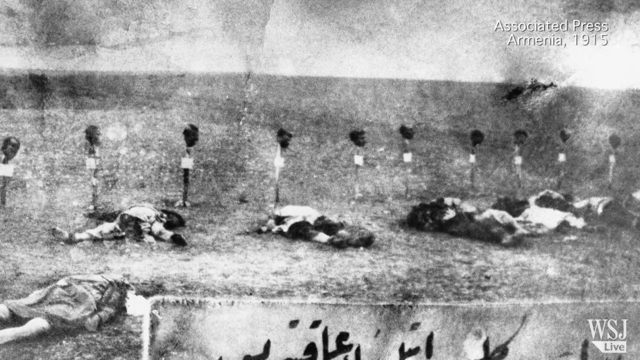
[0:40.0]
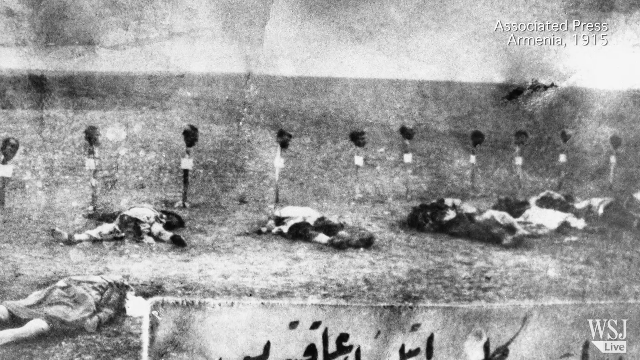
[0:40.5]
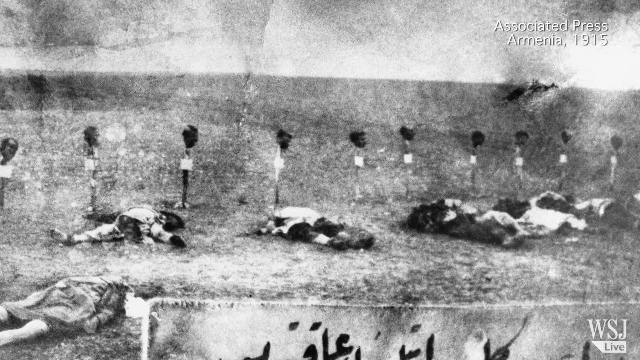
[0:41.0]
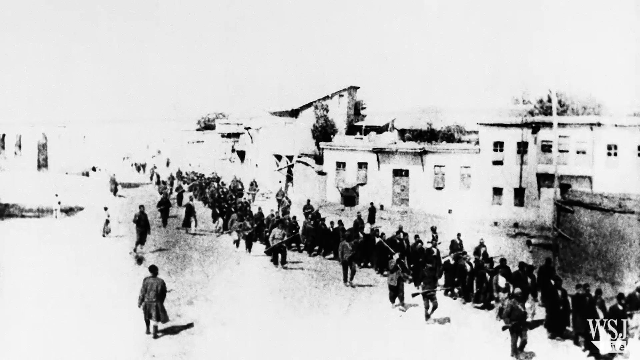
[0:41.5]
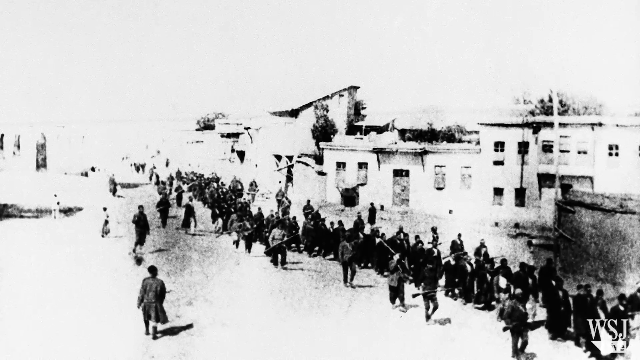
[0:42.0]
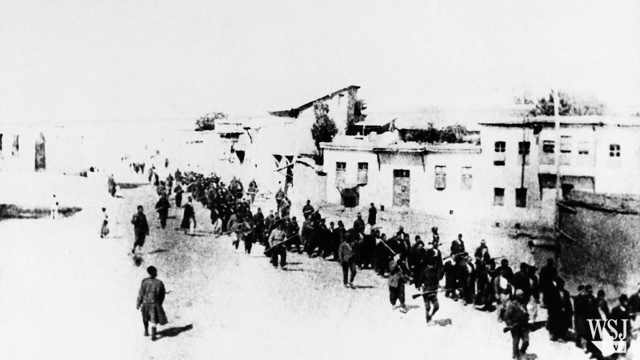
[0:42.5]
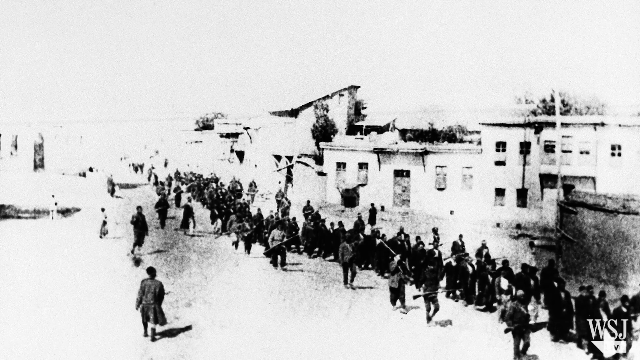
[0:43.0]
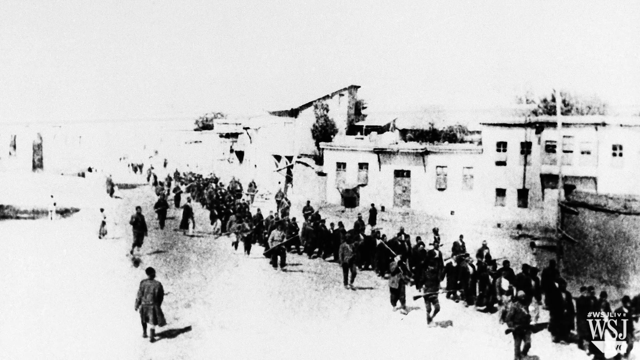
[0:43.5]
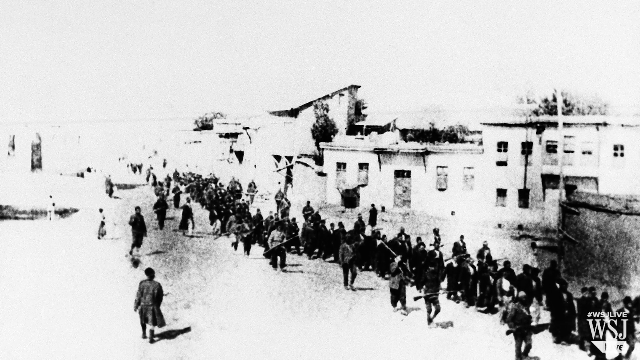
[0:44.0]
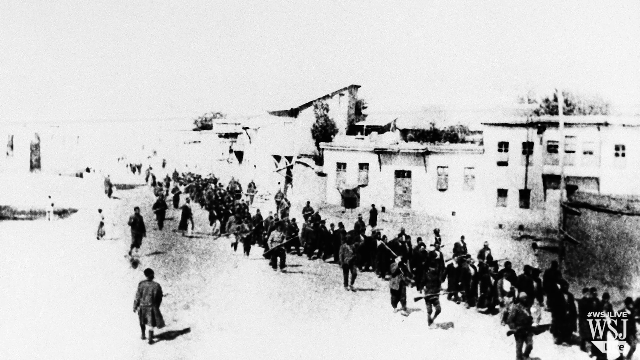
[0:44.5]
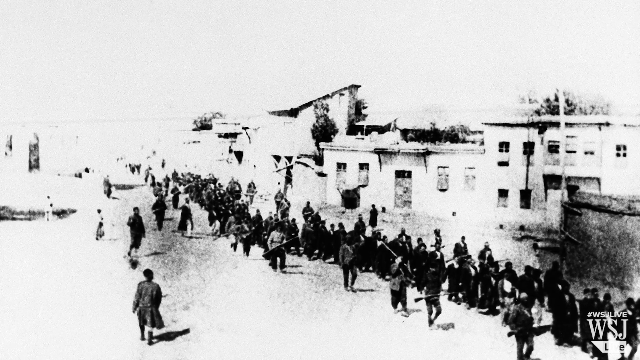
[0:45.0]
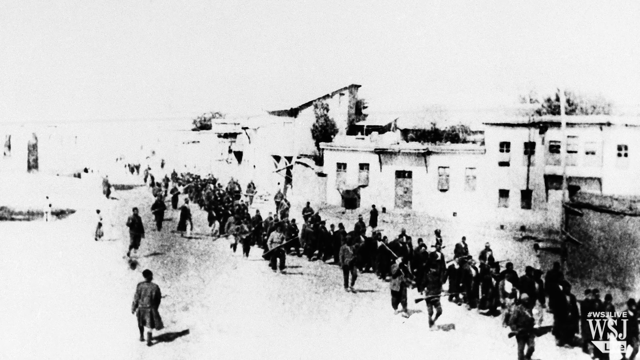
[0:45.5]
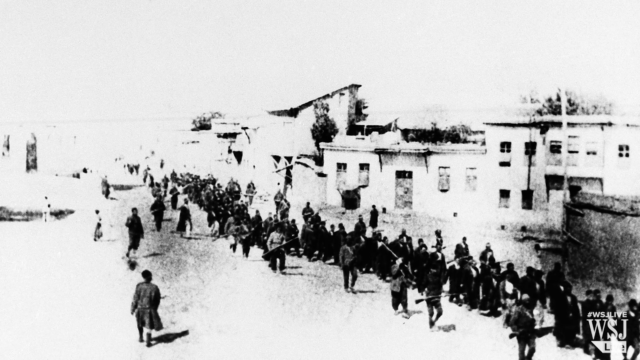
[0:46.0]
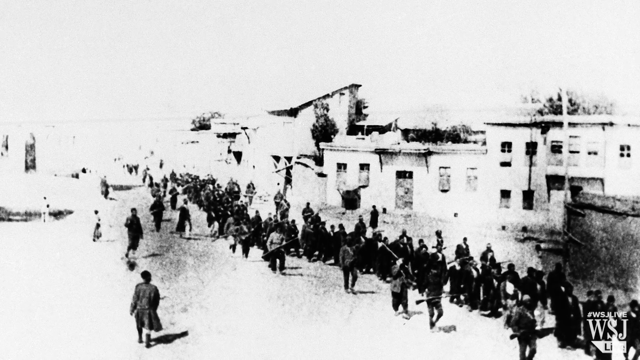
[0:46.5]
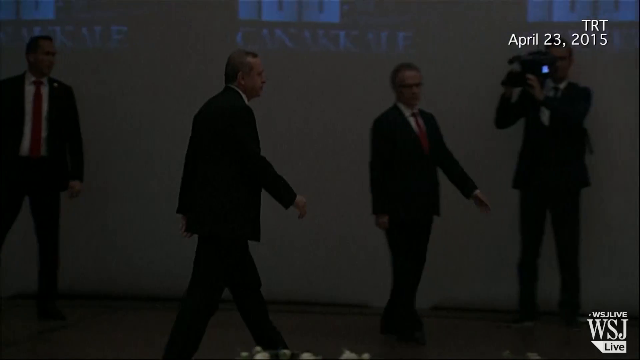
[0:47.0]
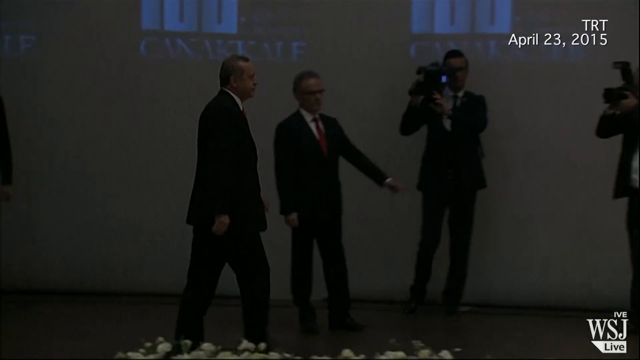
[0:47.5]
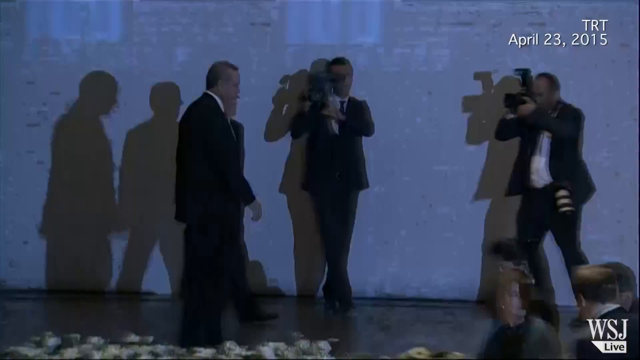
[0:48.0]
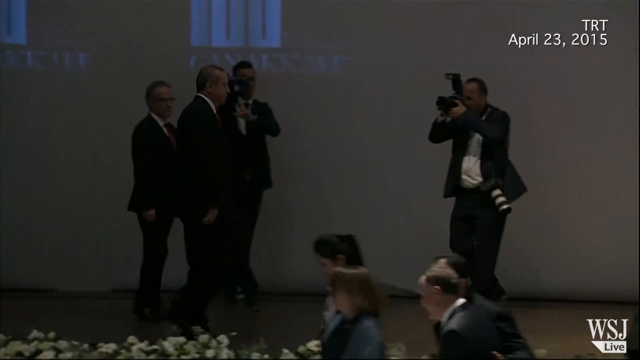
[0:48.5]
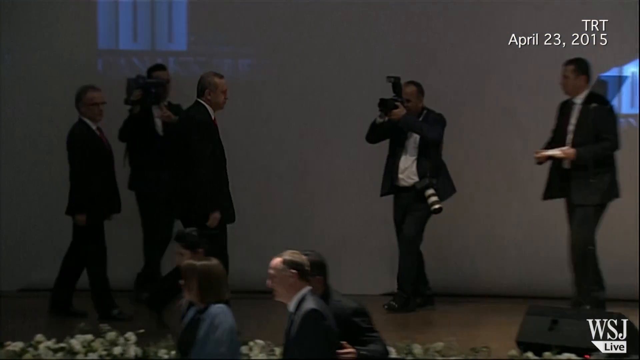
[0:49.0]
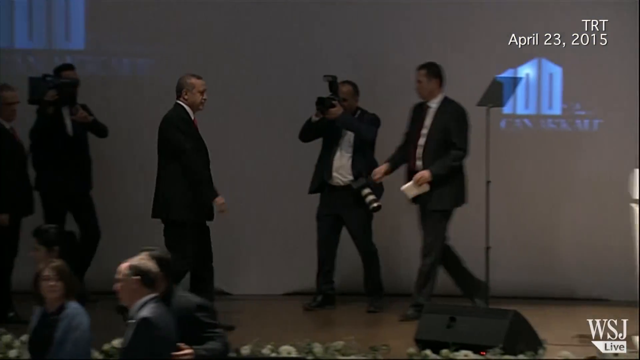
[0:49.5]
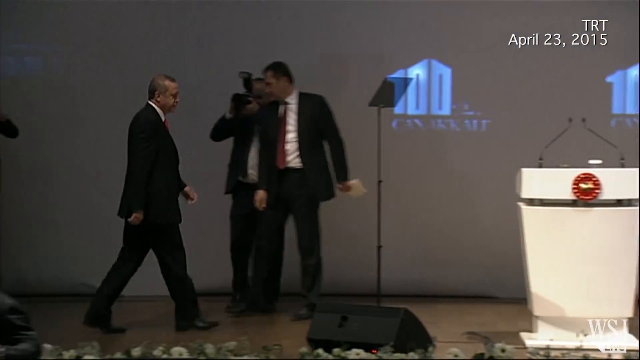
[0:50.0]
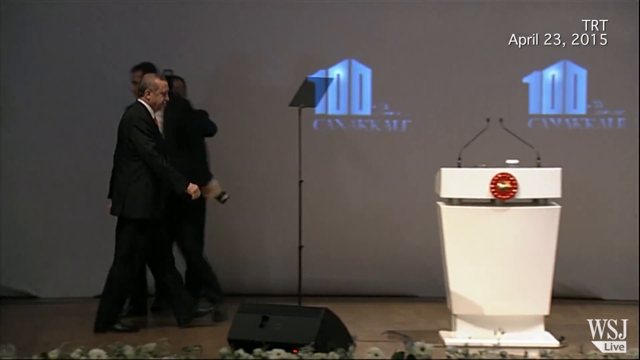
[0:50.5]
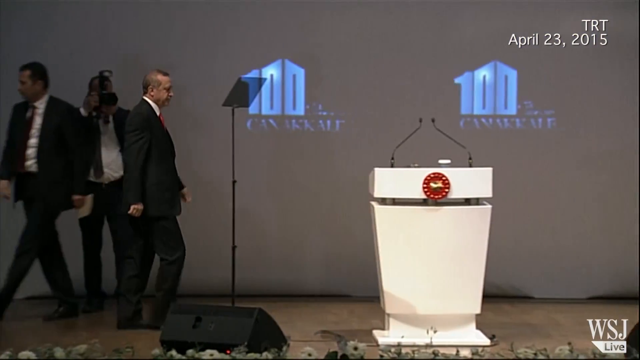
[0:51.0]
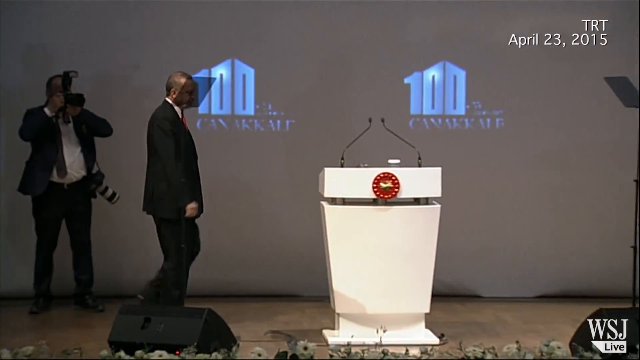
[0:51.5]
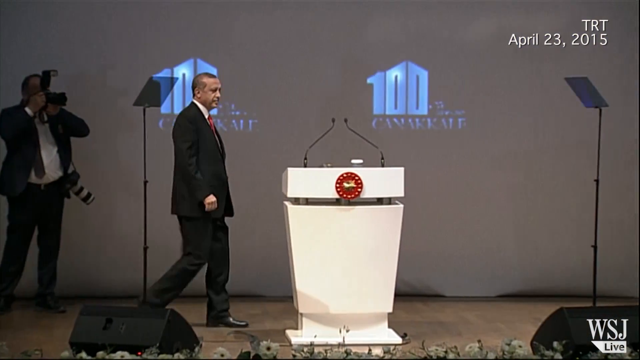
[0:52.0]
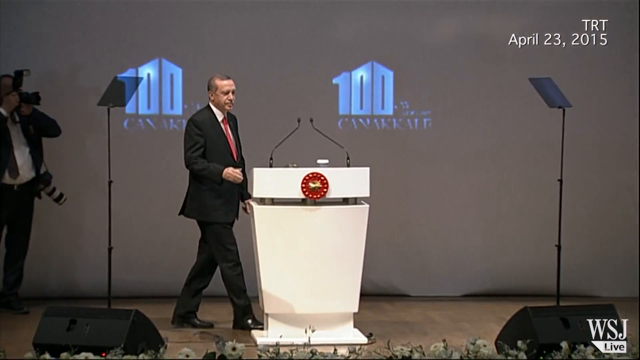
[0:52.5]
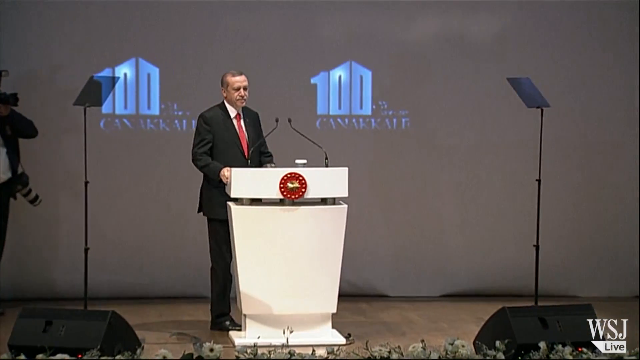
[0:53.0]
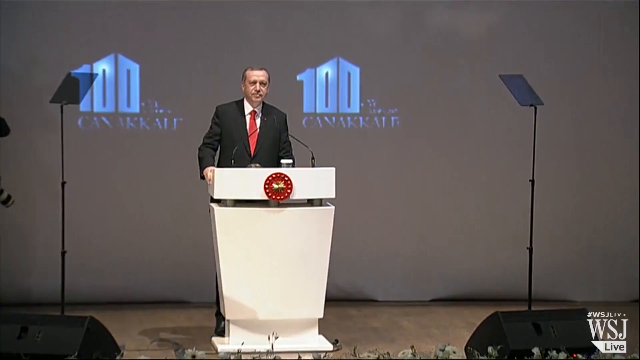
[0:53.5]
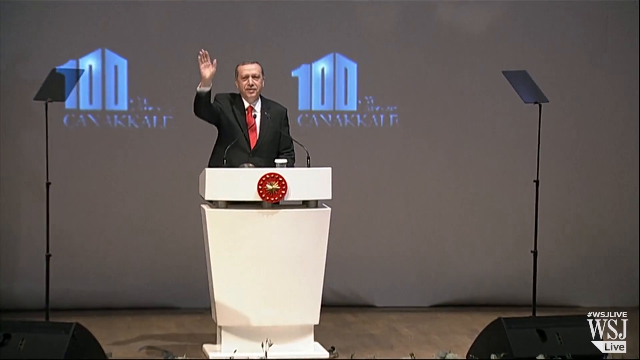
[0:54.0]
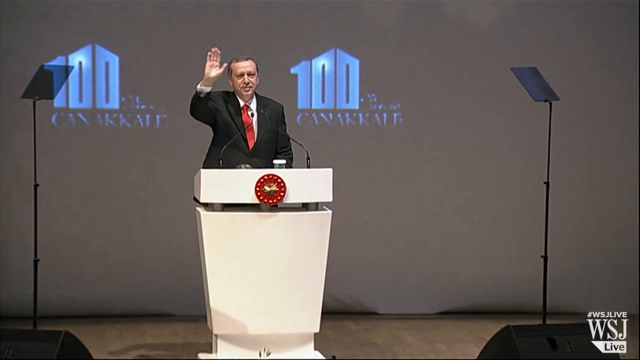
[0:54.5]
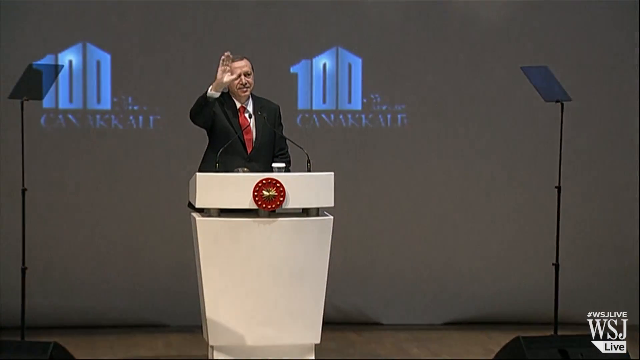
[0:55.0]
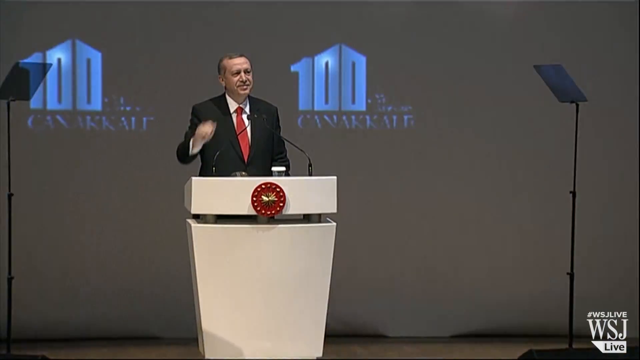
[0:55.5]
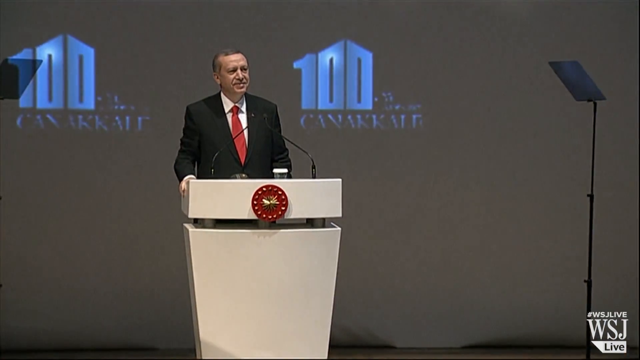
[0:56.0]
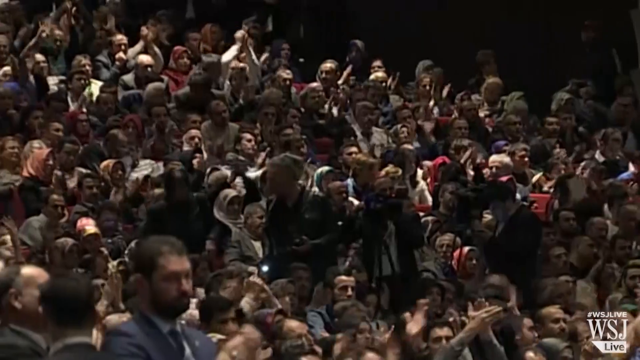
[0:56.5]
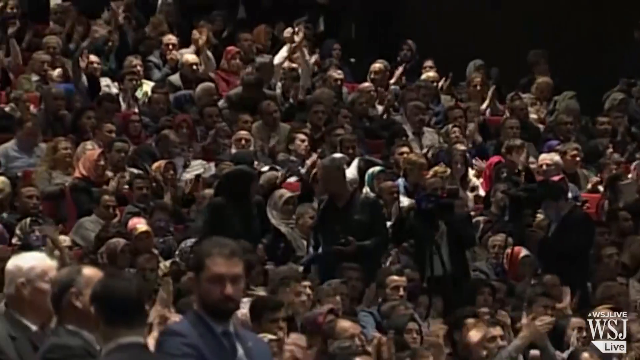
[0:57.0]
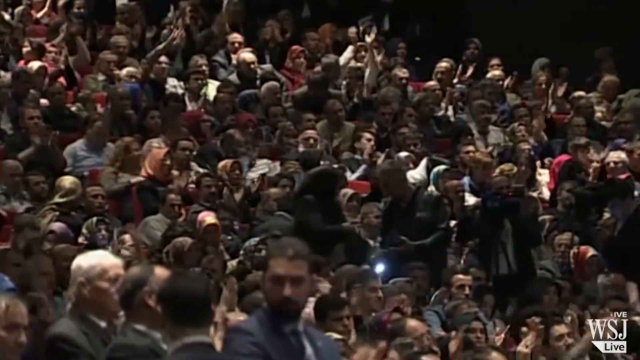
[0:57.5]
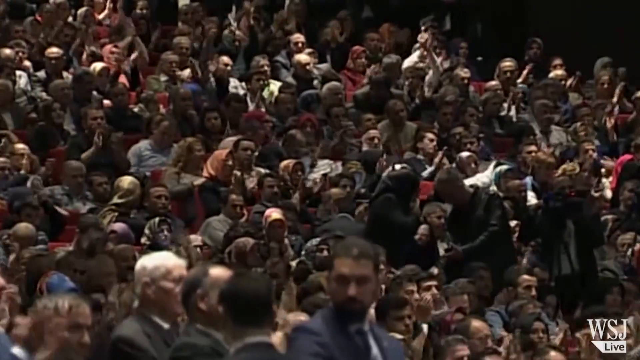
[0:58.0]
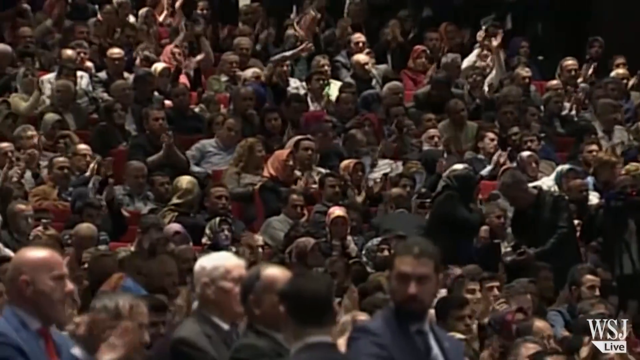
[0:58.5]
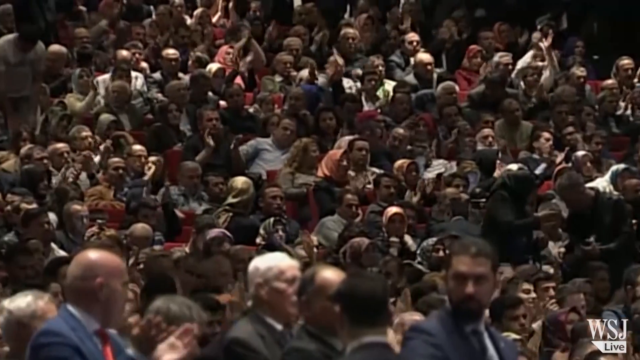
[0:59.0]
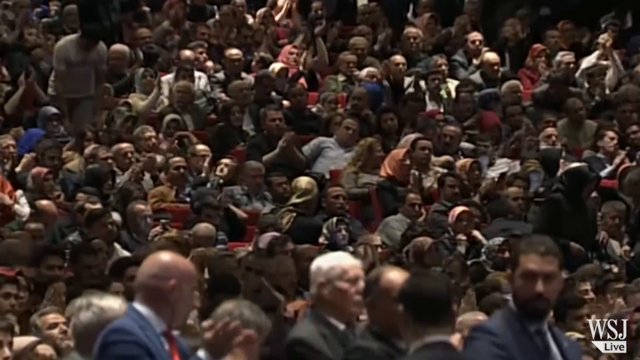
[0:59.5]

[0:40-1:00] A black and white, very blurred image appears with the text "Associated Press Armenia 1915" in the top right. It looks like a desolate gray picture with markers, like poles of some kind, going all the way across it, and in the middle of the screen four dead bodies are laid out. The scene switches to another black and white photograph of a bunch of people in a very long line walking through what looks like a poor, desolate town, all seeming to walk in the same direction. The scene then switches to a stage where a man in a black suit walks to the right; another man is in the middle next to a white podium with two speakers and a red insignia on the outside of the podium. The man walks up to the podium to speak and waves his right hand up in the air. The scene then switches to the watching crowd.